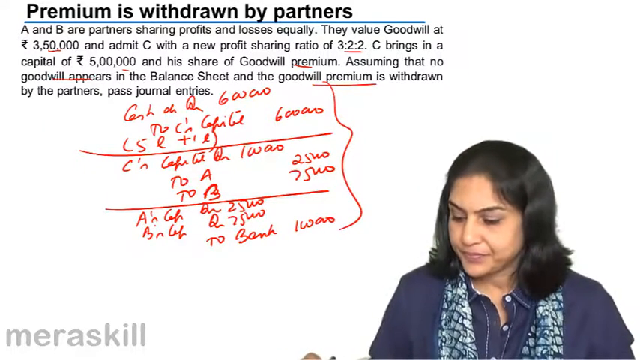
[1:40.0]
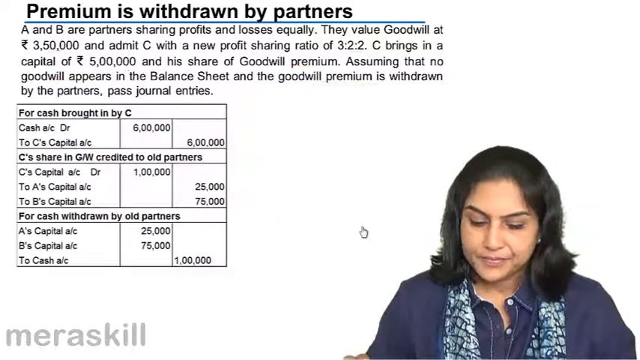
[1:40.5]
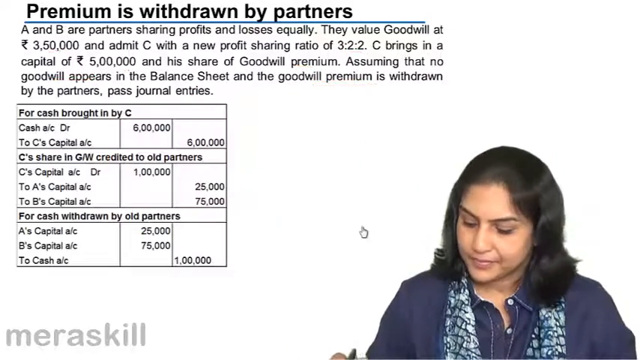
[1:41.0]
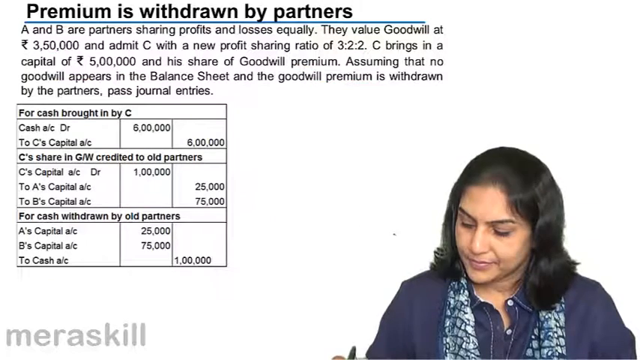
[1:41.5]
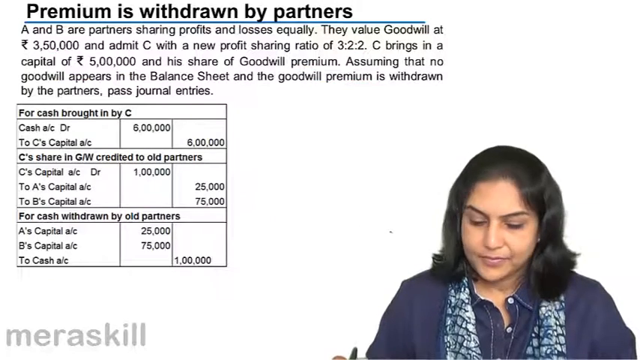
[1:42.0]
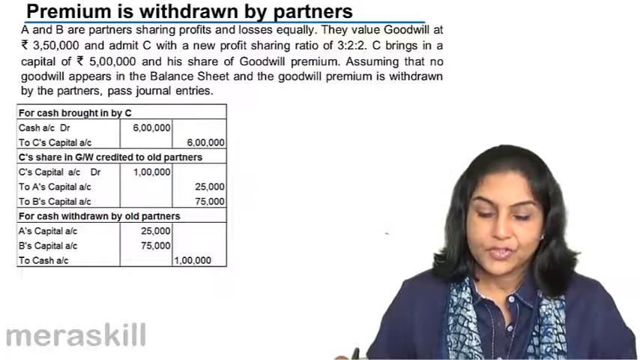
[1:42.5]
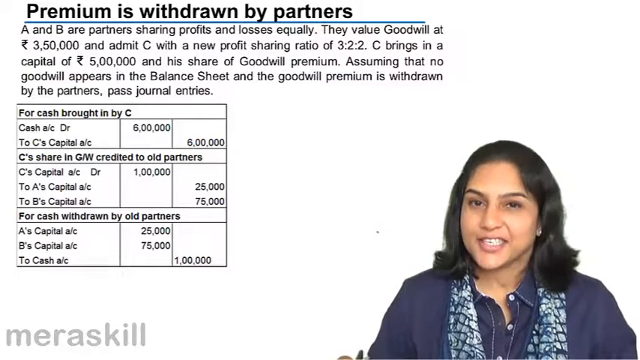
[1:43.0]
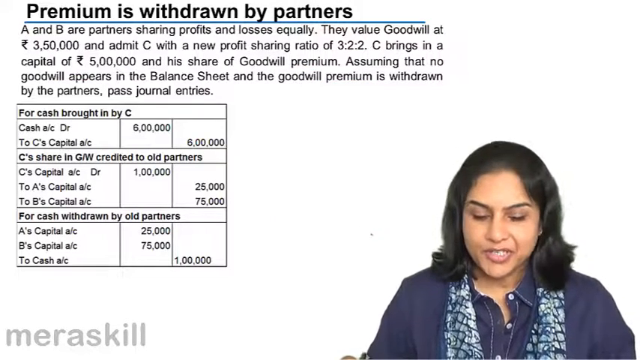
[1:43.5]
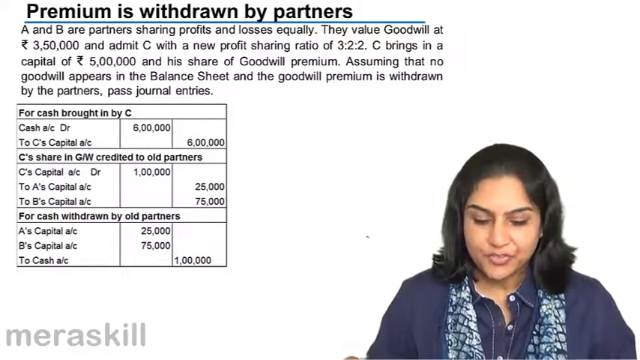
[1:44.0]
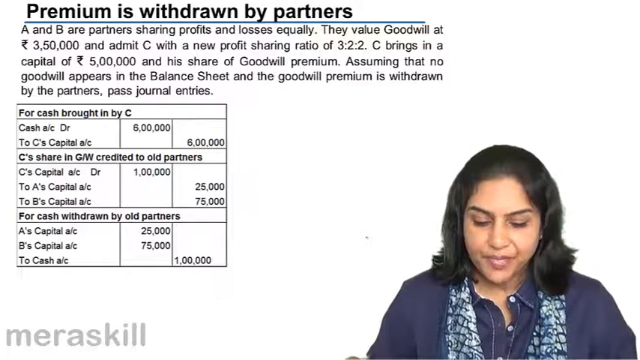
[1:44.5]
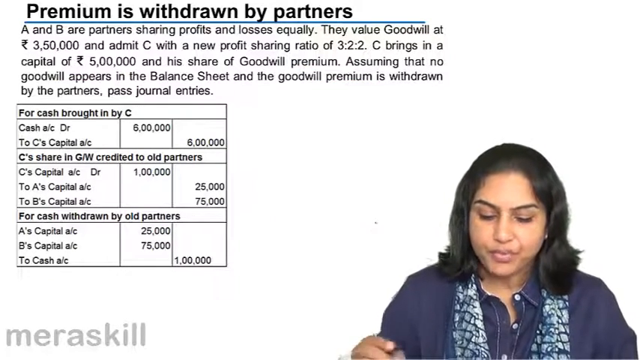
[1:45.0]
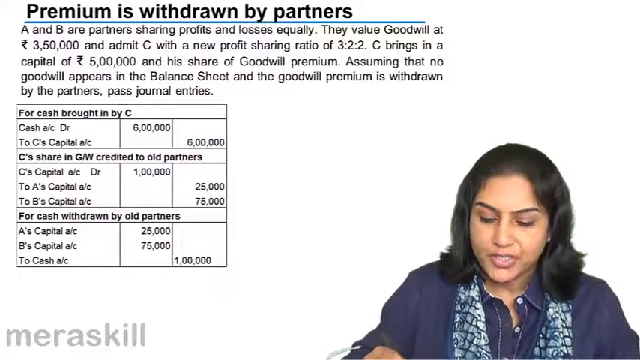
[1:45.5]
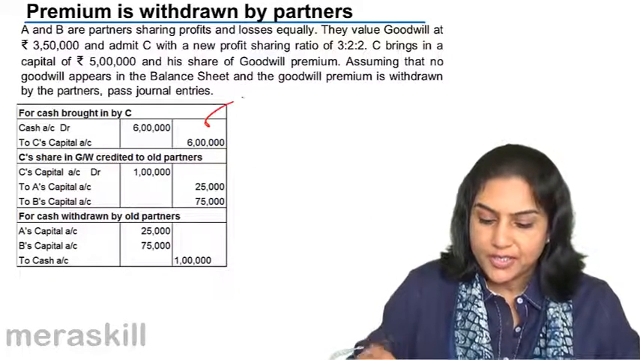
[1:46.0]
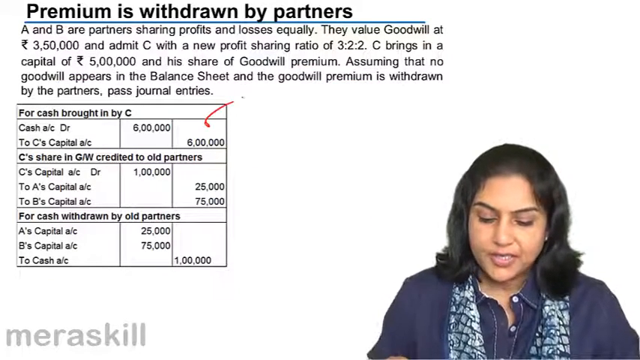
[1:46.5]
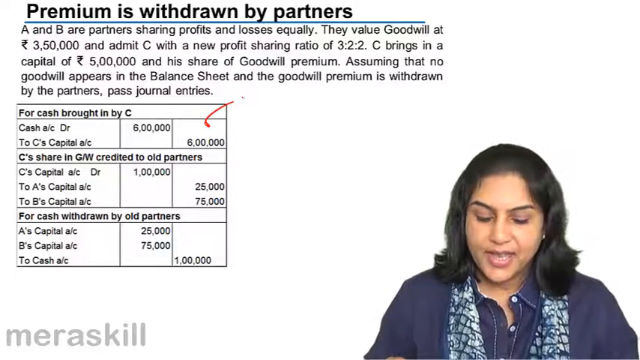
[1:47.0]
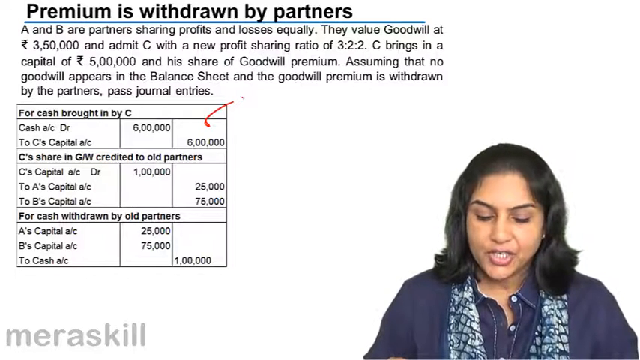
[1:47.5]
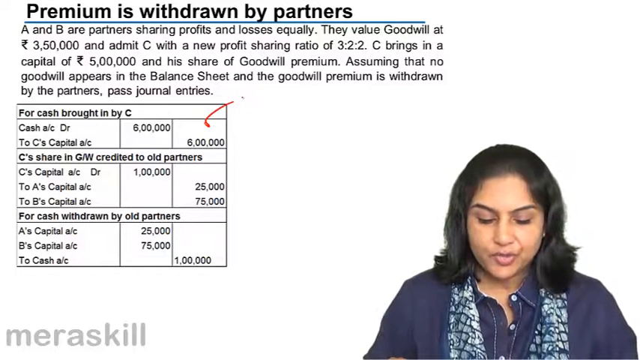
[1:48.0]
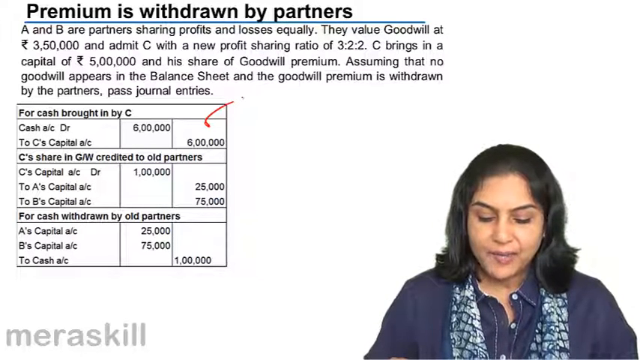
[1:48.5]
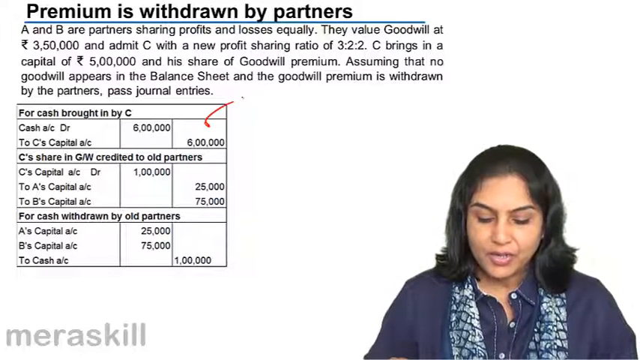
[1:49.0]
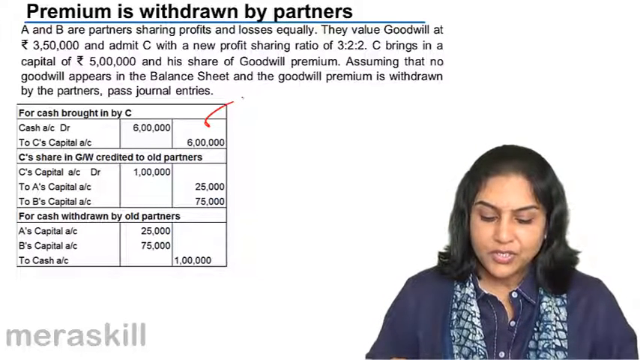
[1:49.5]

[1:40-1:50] The woman looks down briefly at the page she has been working on before the video quickly transitions to a new screen. The page has changed and now shows a column box with different sections in it. She looks down straight in front of her briefly before turning her head to the right. The page still says "premium is withdrawn by partners." She looks down and back up, sort of smiles while speaking, then looks back down while speaking. Her right hand flashes a few times, moving up and down in and out of view of the camera.